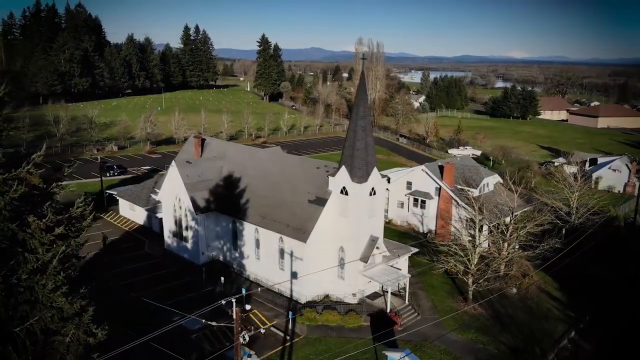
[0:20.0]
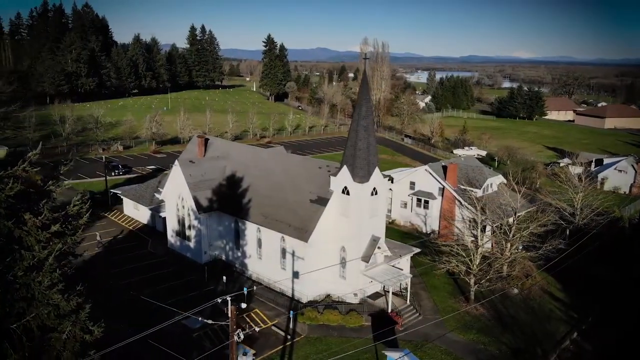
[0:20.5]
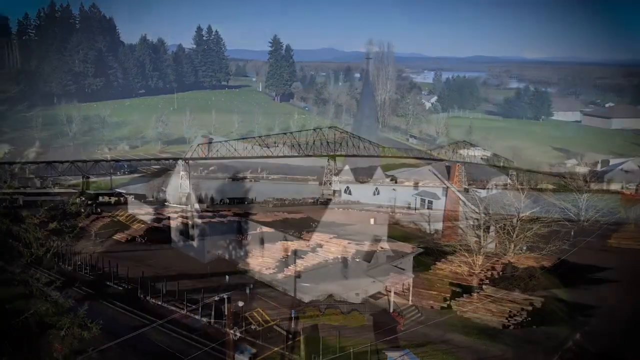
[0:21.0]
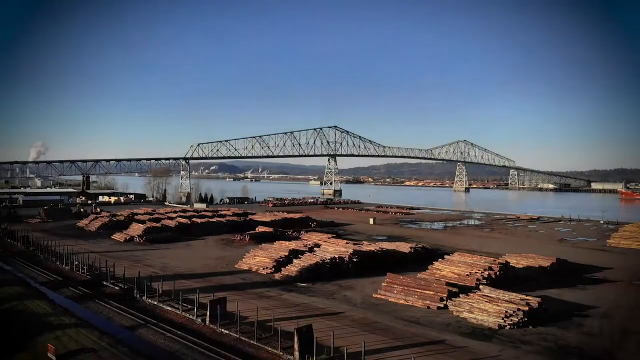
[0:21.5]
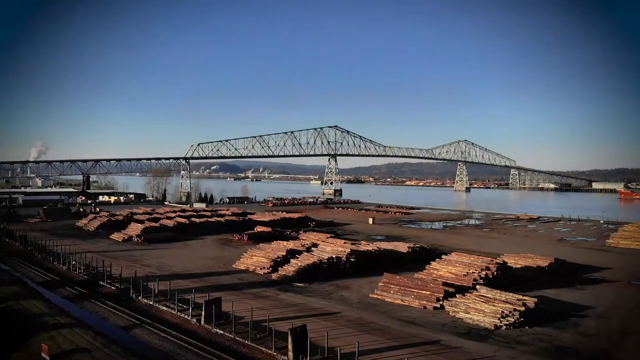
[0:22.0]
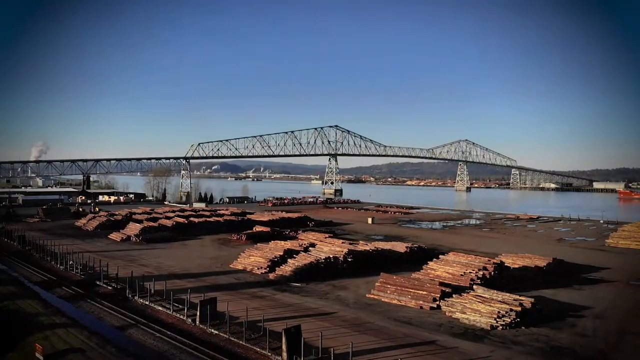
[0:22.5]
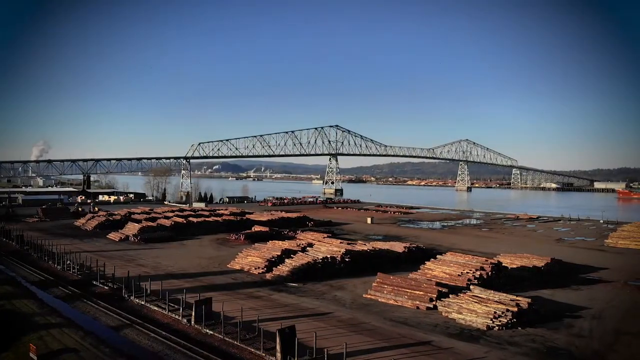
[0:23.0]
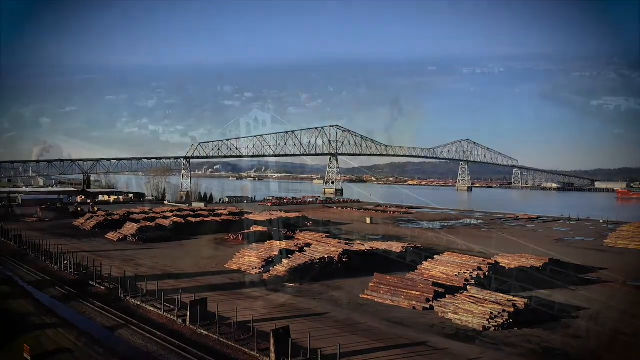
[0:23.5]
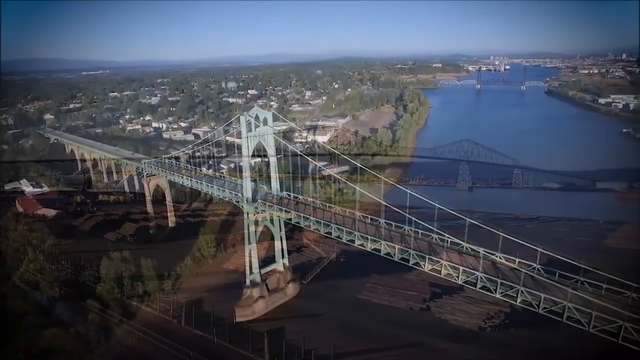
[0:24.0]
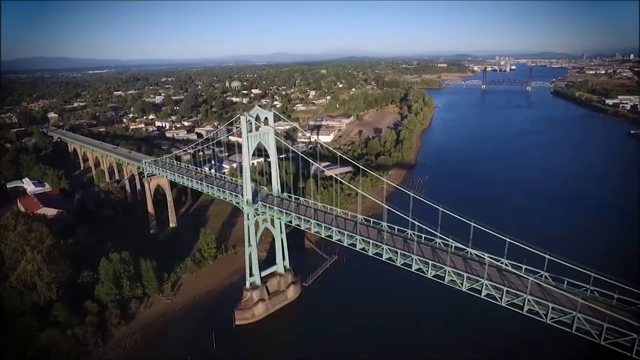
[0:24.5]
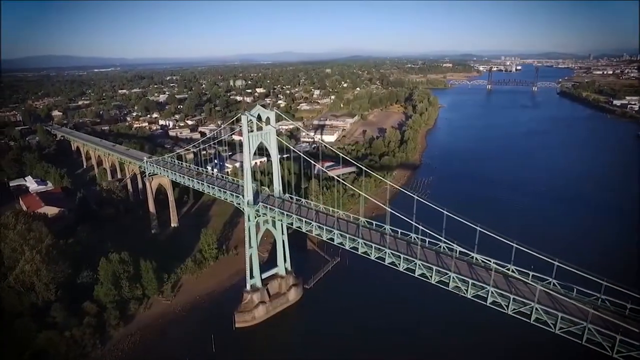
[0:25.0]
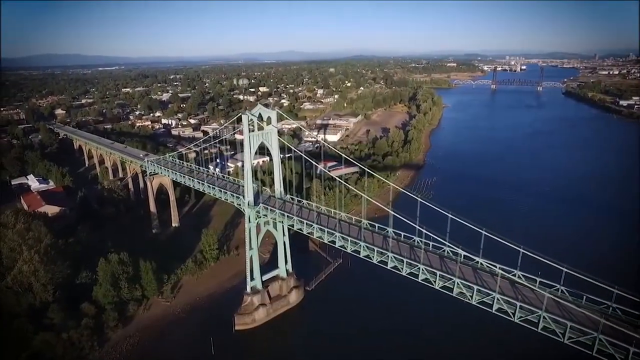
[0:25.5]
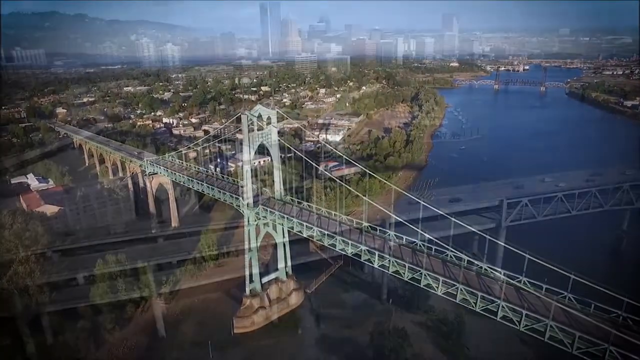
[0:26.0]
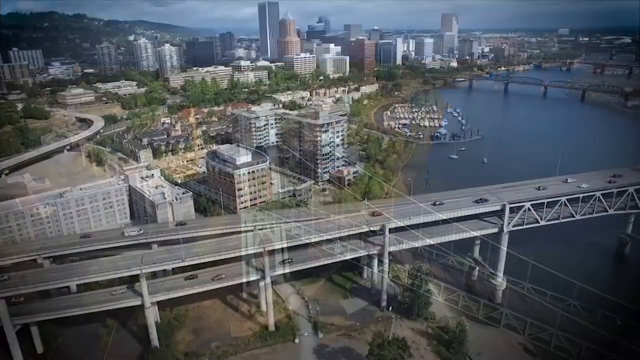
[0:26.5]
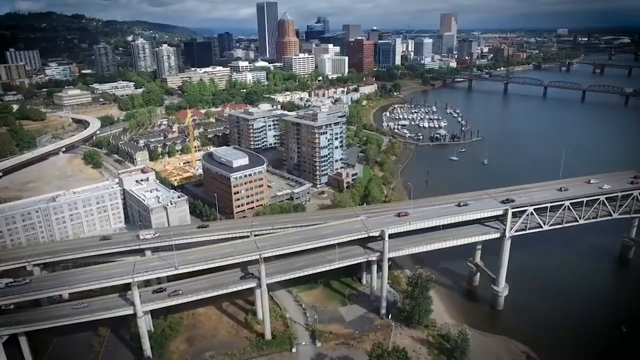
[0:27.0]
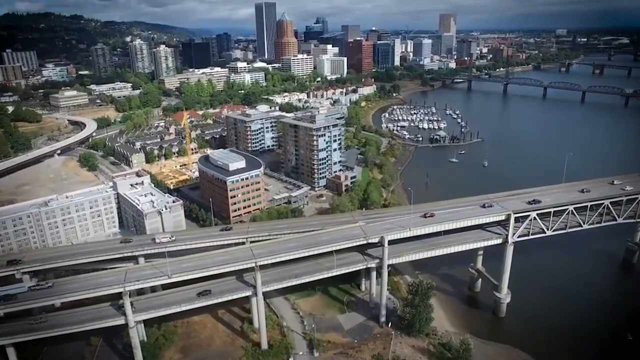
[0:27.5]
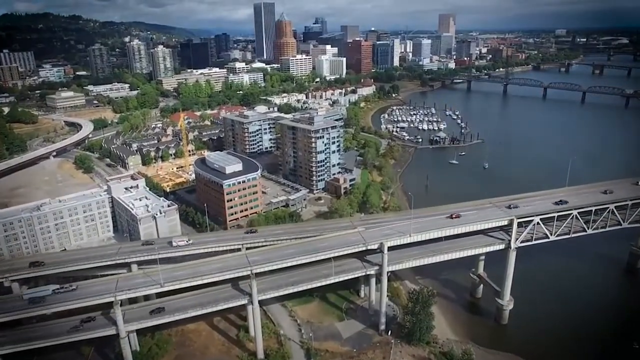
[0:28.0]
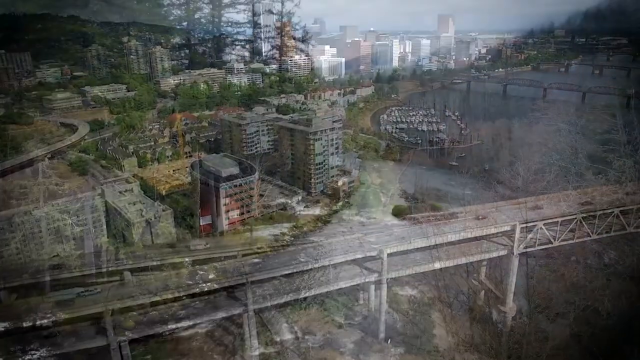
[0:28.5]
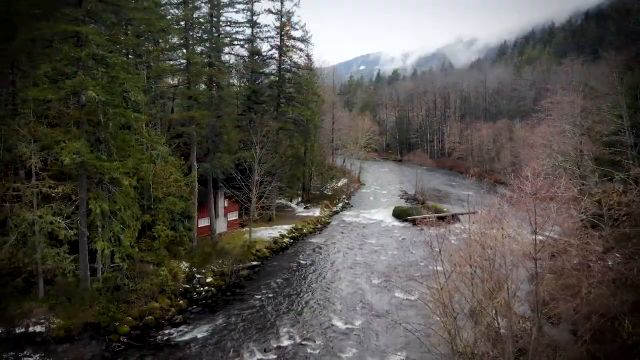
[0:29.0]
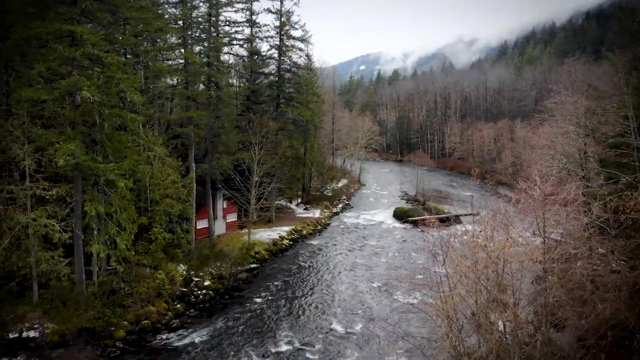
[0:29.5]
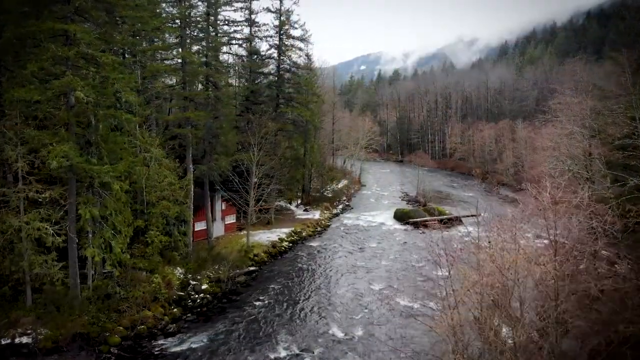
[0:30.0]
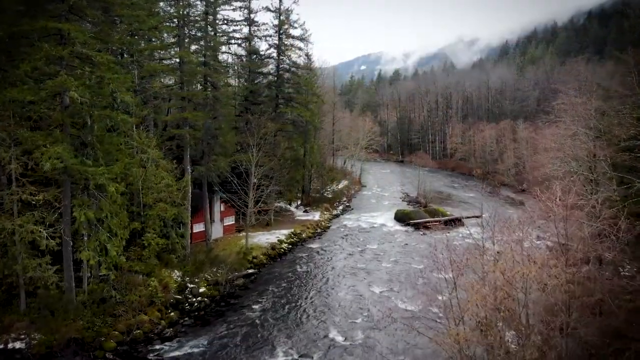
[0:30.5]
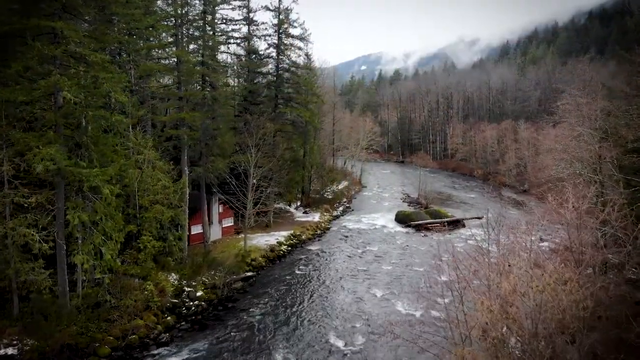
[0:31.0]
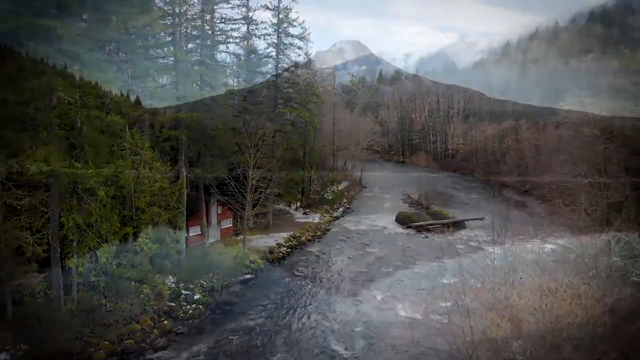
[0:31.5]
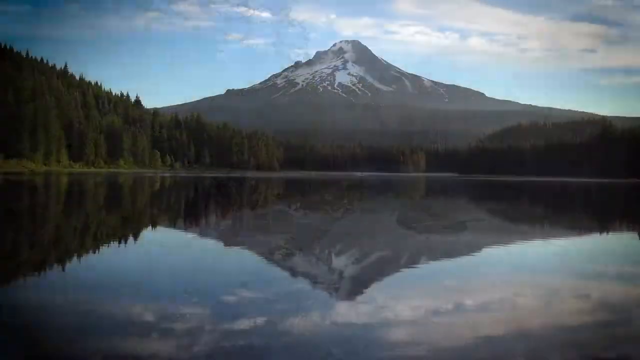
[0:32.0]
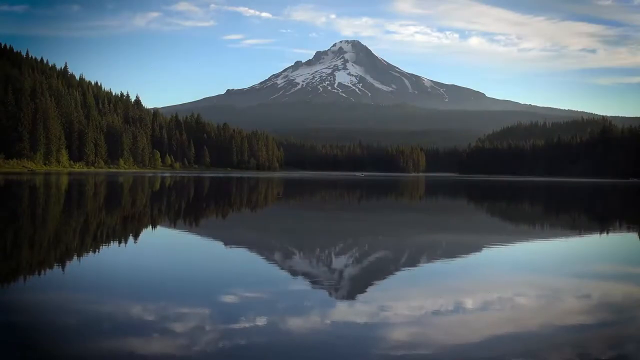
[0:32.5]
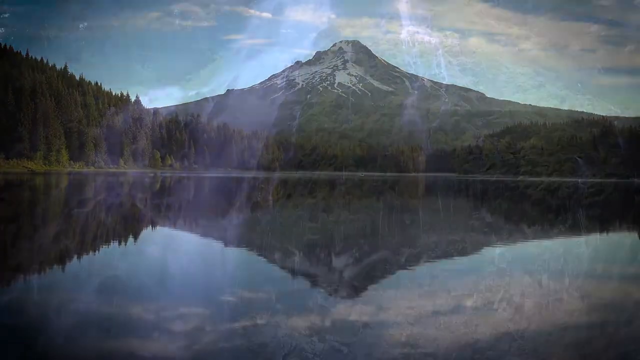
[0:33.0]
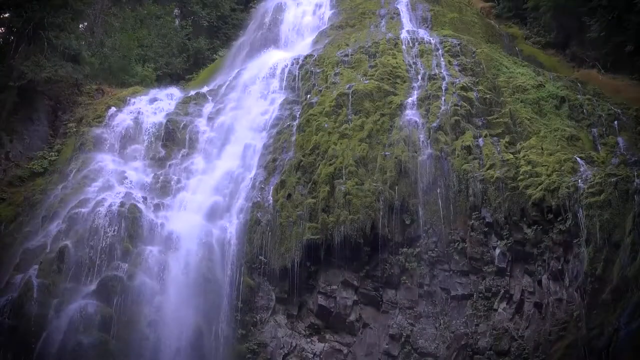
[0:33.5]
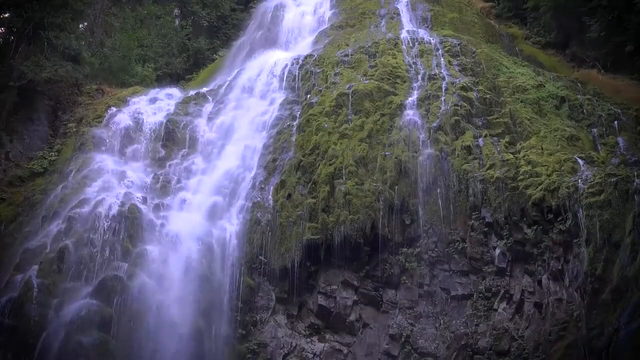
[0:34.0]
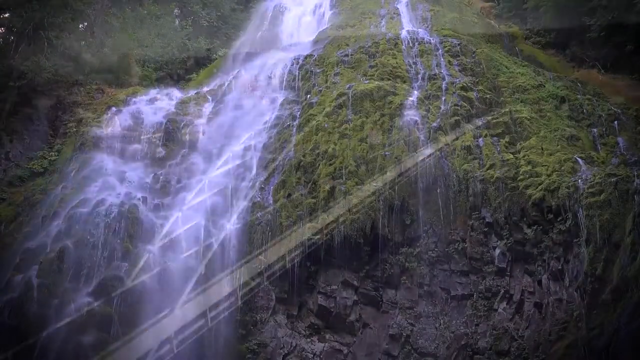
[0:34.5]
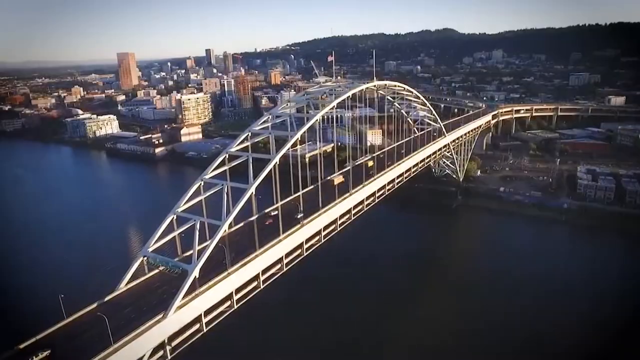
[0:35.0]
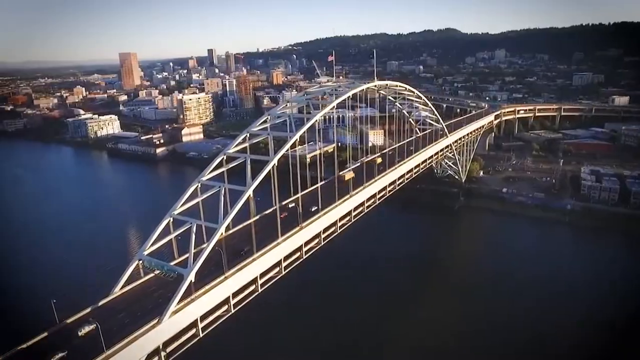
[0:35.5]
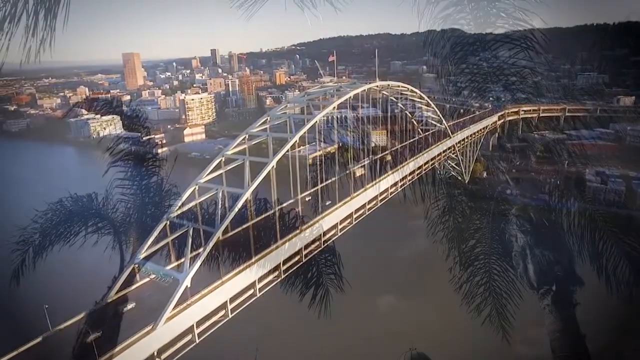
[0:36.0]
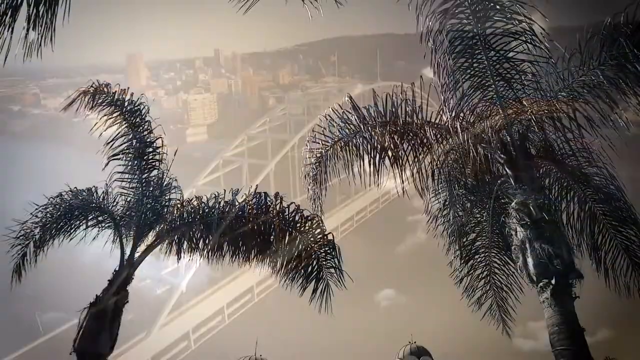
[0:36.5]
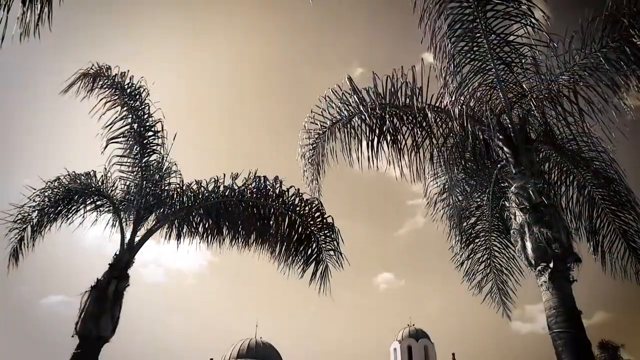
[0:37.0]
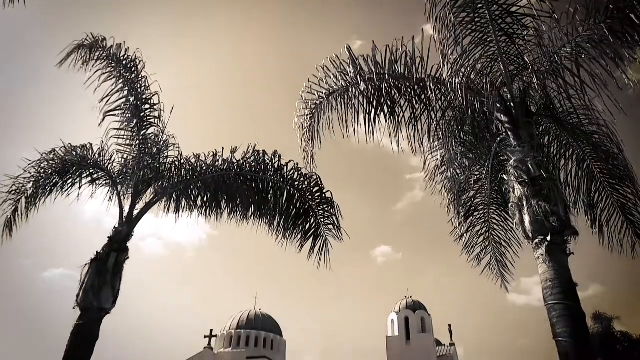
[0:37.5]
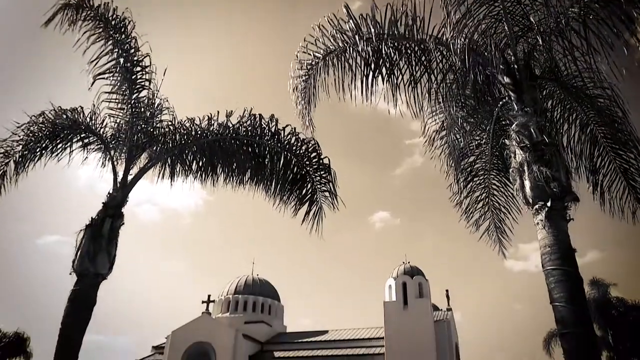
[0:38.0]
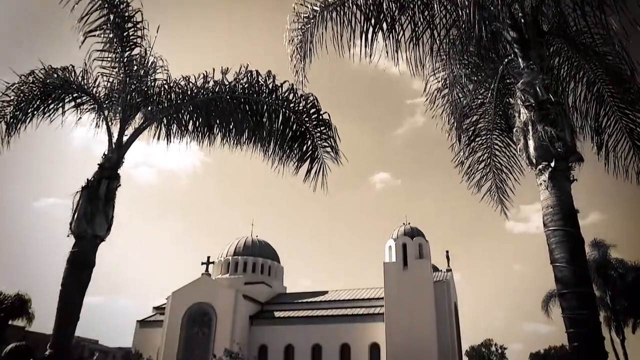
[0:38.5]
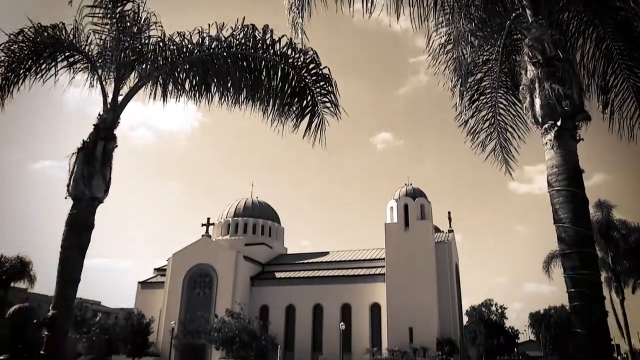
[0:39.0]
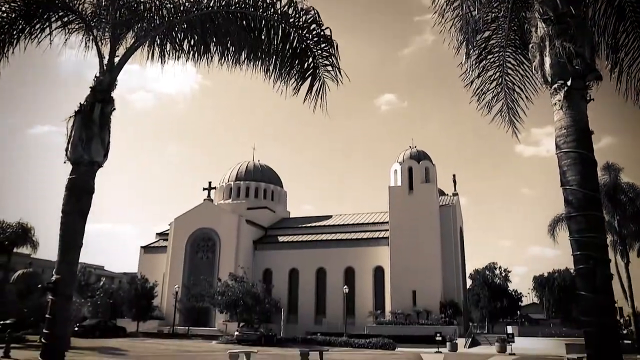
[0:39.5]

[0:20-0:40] A series of aerial shots moves by rather quickly. First there is a New England-style white church with a large steeple, and to its left a smaller white house with a red chimney visible. Beyond are fields and low hills in the far distance. Next is a bridge spanning a long, wide river; it has two arches through the center, its entrance and exit slope gradually up and down, and more low hills are in the distance. Then a different bridge over a river is seen from above; it has large columns in the center holding the supports up, and in the background are many houses, trees, and a far horizon blurred by haze. An overhead view of a city follows, with yet another bridge crossing a river, carrying many cars. The bridge has two decks, upper and lower. The city is probably Boston, based on a building that looks like the Prudential Tower, and other bridges cross the river further down. Next, a river cuts through high mountains: on the left bank is a small red cabin with white windows surrounded by tall pines, a large rocky outcropping is in the center of the river, and on the right are more pine trees, somewhat bare. Then a very tall mountain peak with snow on top is reflected in a lake below it, with pine trees on the side. The image switches to a waterfall cascading down over a mossy rock outcropping. Then comes another bridge with one big arch. The scene quickly changes to two palm trees seen from the bottom up, and as the camera pans down, a mission-style white church comes into view.